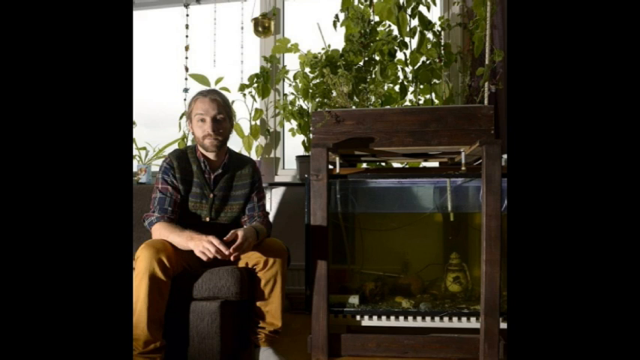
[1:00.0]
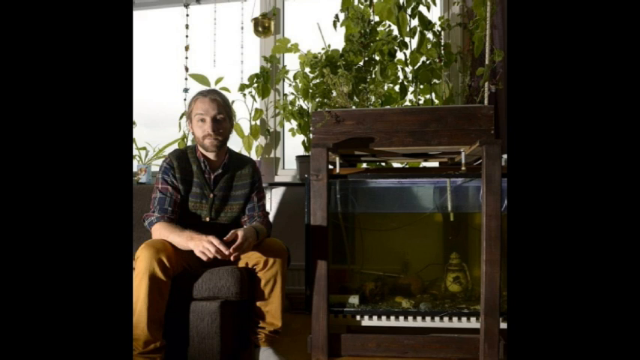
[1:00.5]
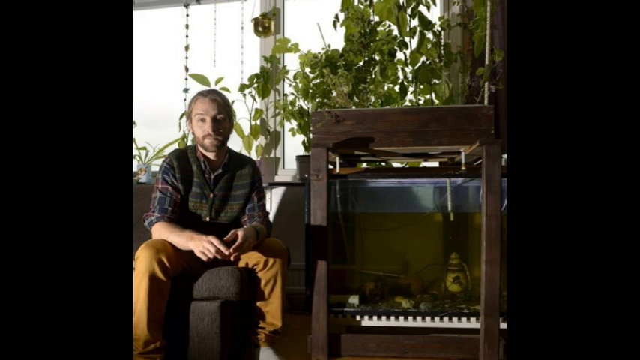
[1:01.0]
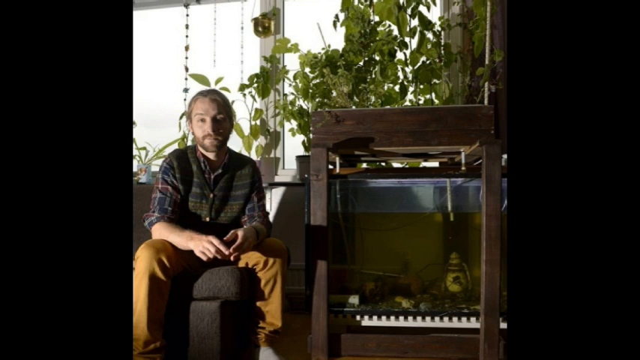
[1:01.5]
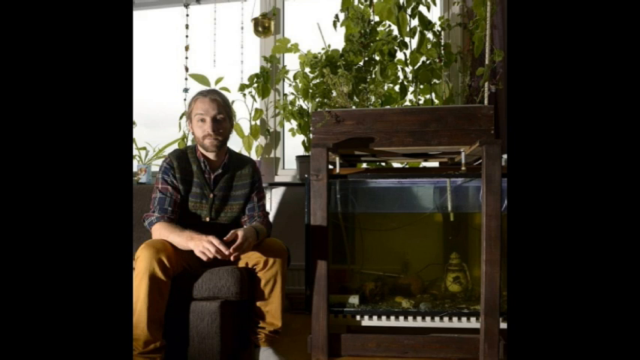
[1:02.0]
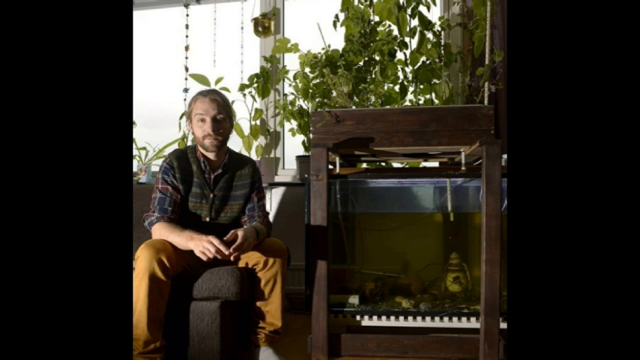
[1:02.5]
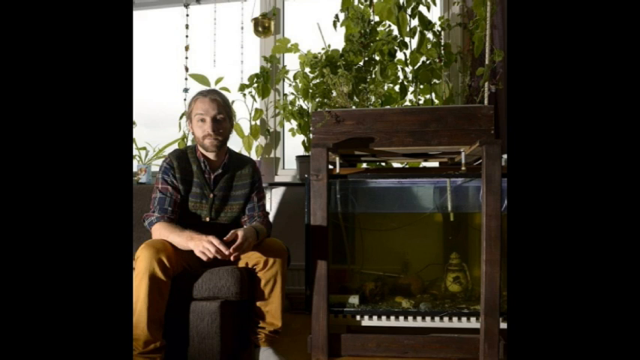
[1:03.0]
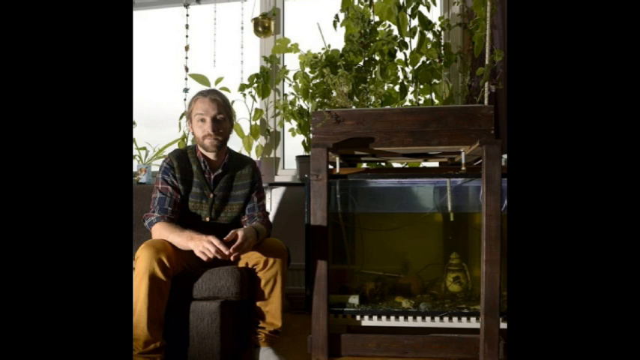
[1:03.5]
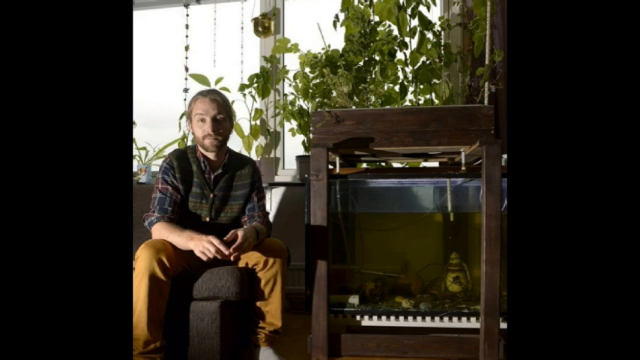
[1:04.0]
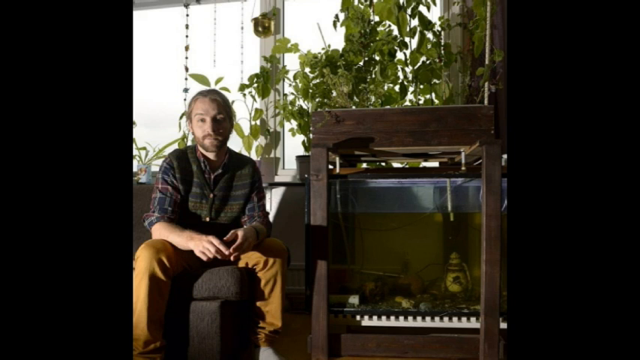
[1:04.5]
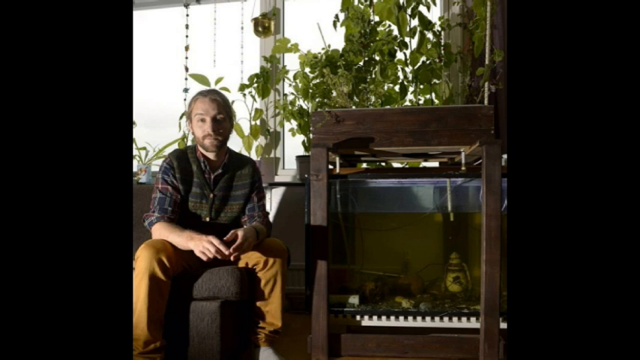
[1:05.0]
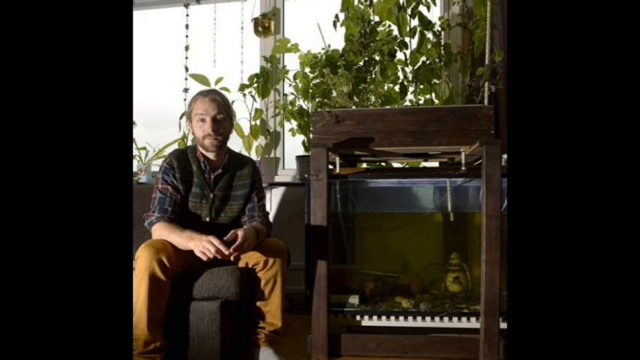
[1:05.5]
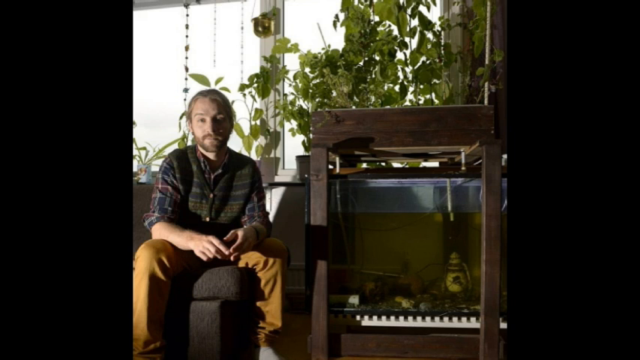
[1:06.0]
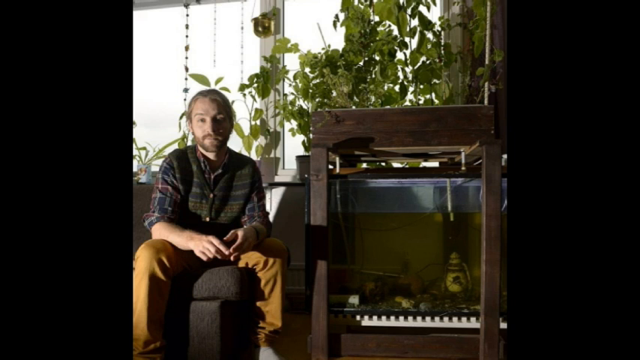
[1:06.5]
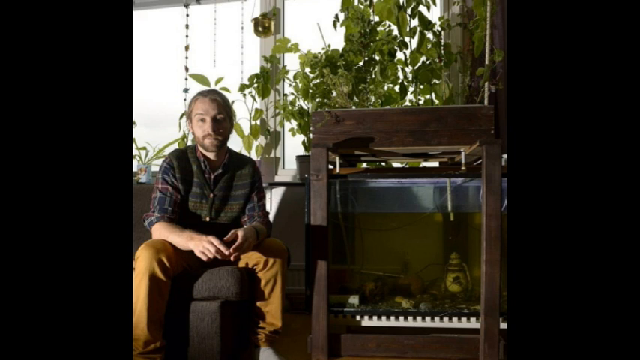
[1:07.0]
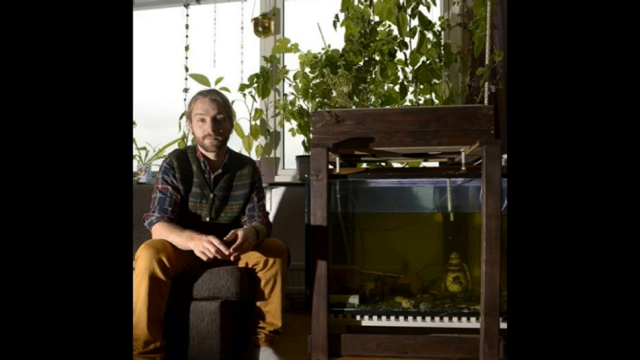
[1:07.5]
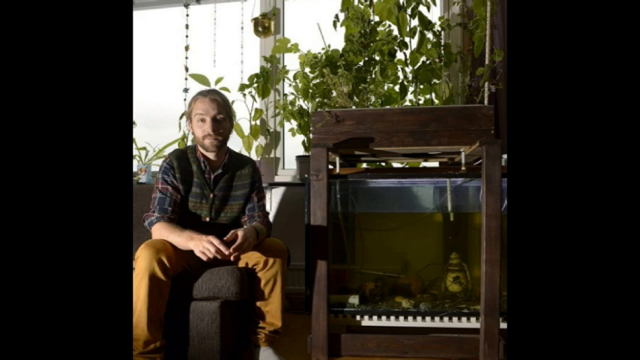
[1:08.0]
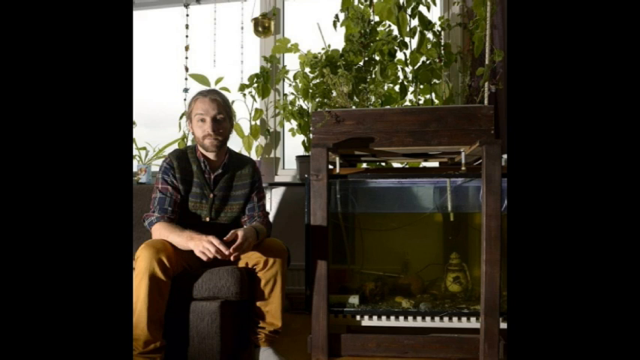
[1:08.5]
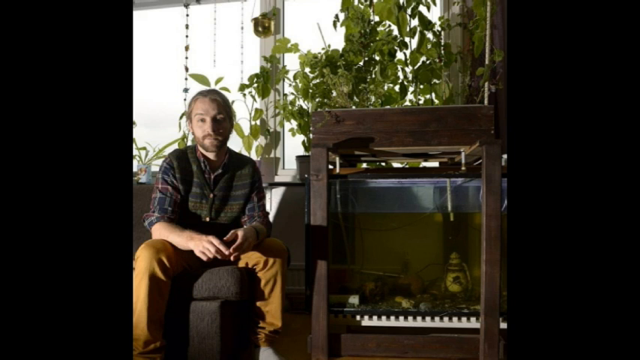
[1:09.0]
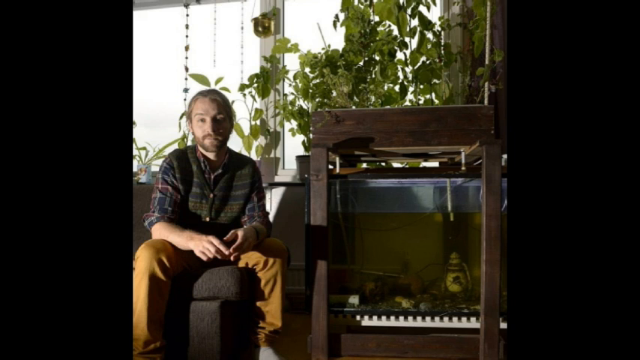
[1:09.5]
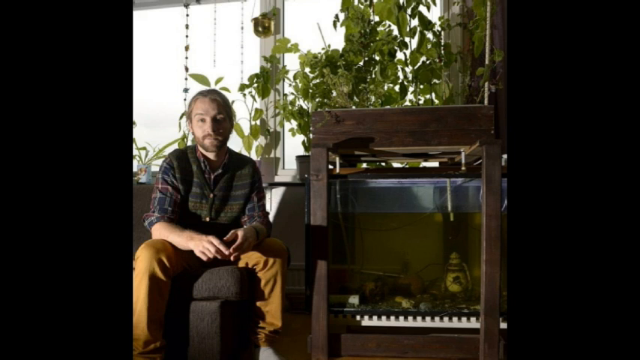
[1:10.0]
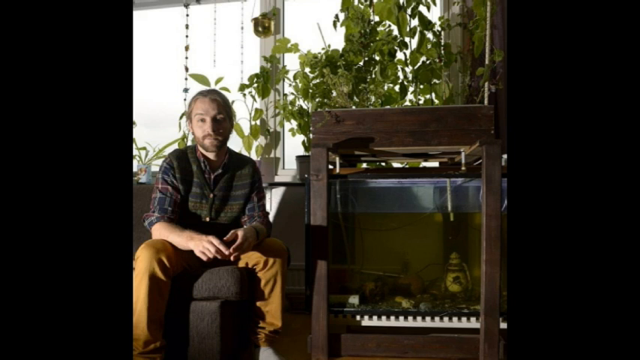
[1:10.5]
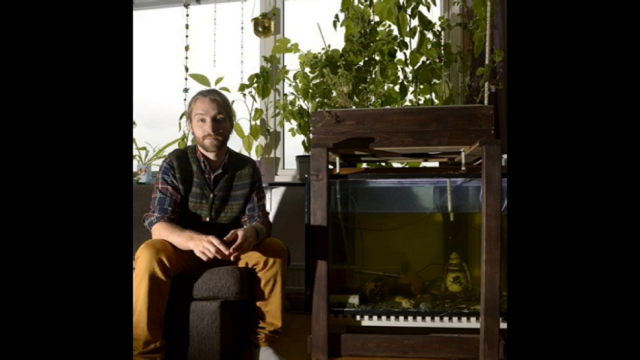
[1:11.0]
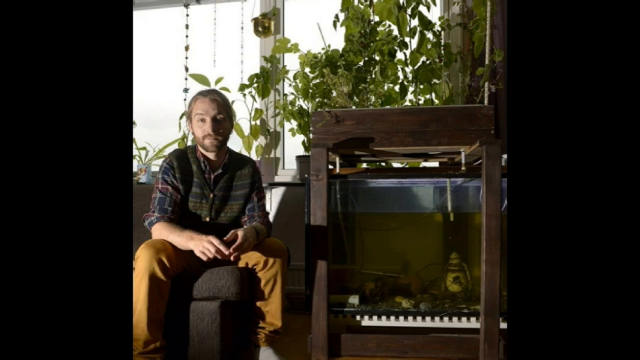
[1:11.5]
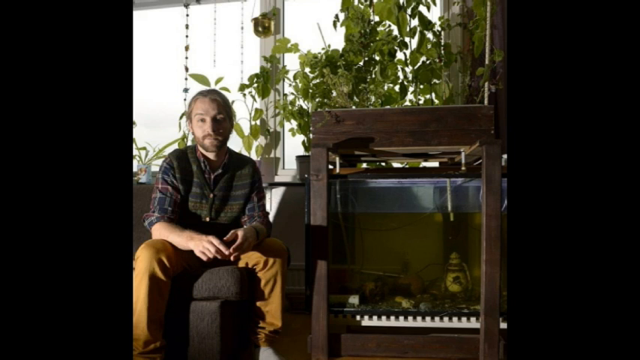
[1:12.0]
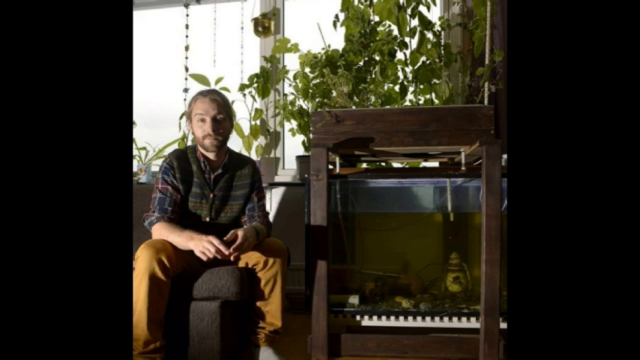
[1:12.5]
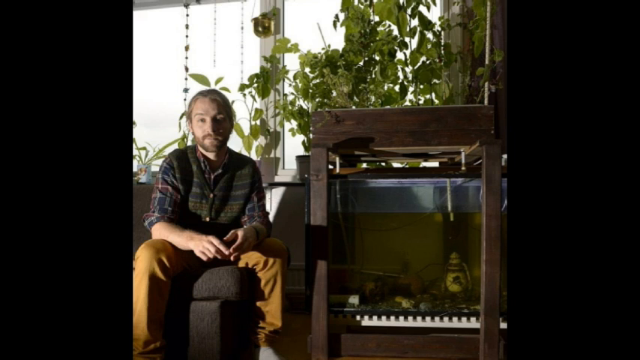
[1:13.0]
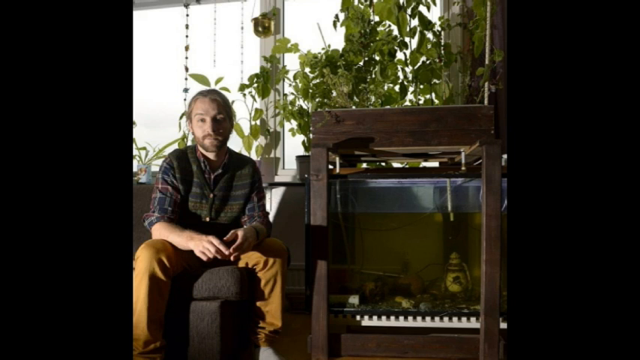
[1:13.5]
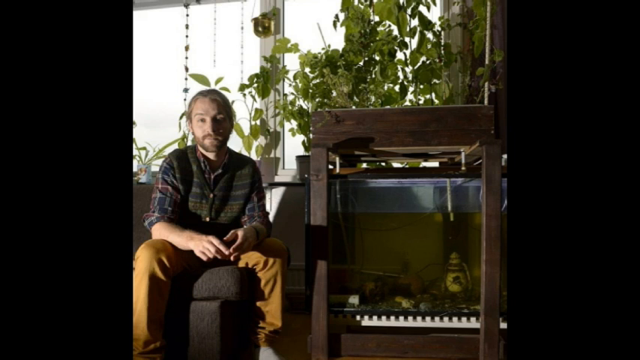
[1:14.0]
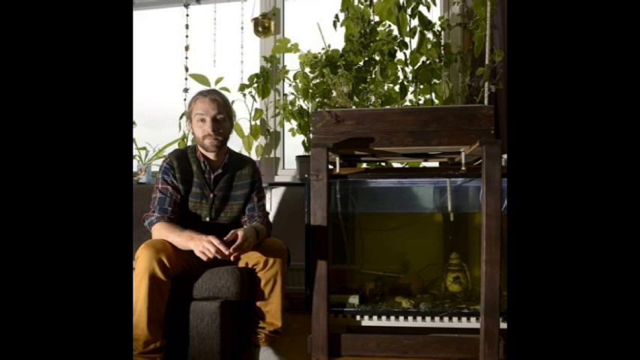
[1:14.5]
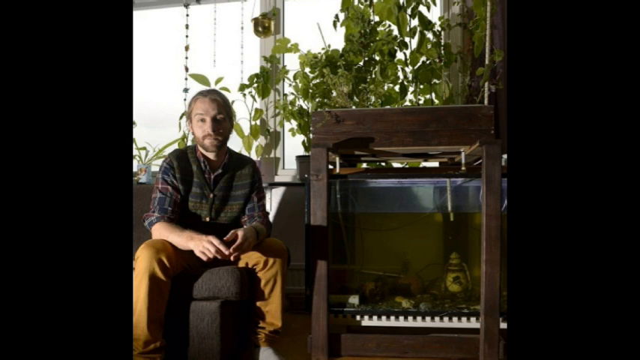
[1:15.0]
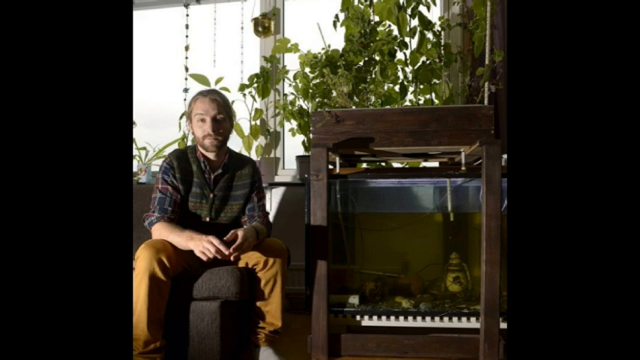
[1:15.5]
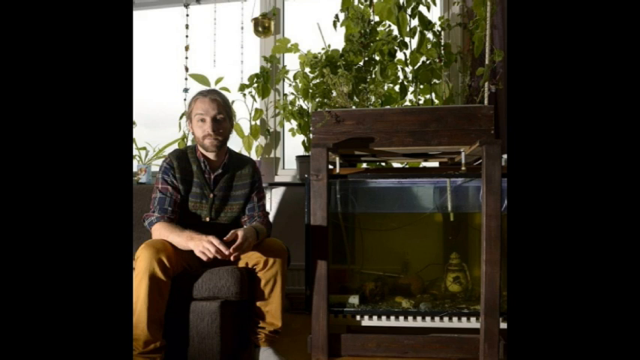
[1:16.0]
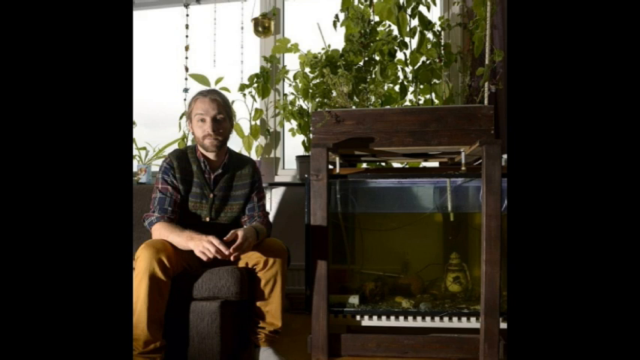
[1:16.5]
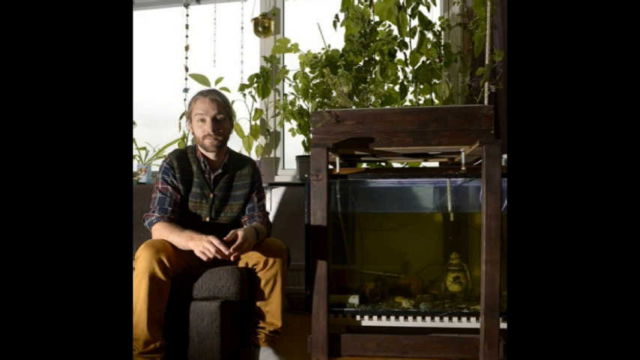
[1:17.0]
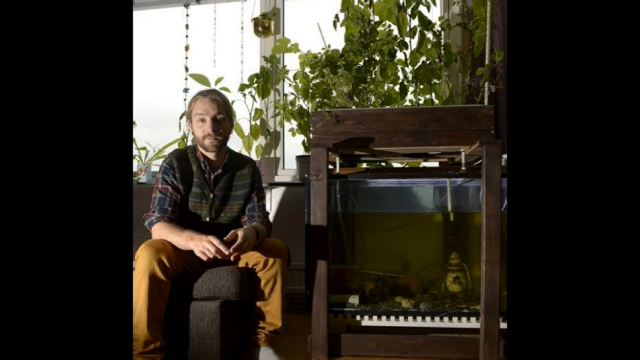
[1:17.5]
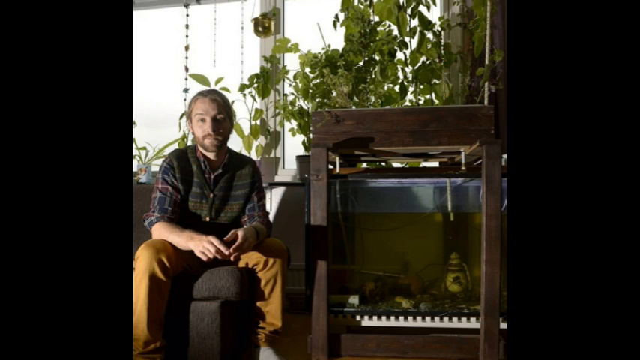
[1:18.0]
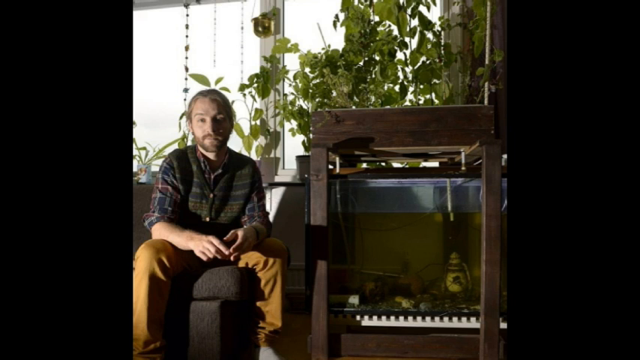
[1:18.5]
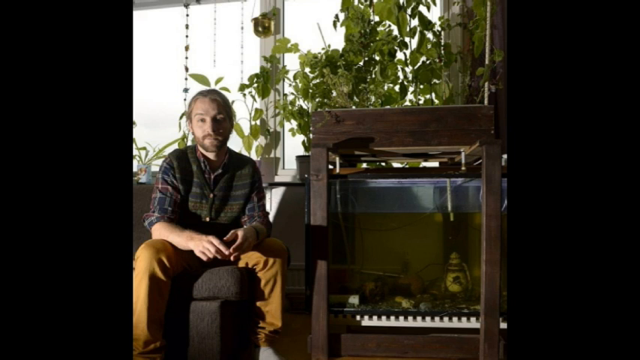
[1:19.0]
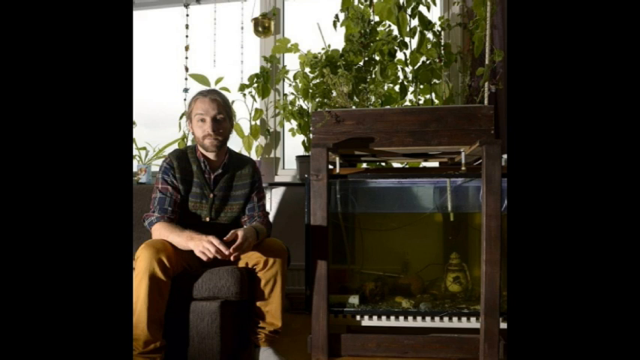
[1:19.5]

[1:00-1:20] A photo shows a gentleman wearing khaki pants and a plaid long-sleeve button-up shirt. He appears to have long hair pulled back into a ponytail and a short beard, and he is sitting on the edge of a chair. Next to him is what appears to be an indoor fish tank with no visible fish; the water in the tank is very green and looks really dirty. There are plants growing behind it, some in pots, and it is unclear whether this is an aquaponic system, since no water is visibly moving from the plants to the tank. There appear to be some tubes sticking down into the water, possibly pulling water up to water the plants, and there also appears to be a ceramic pot inside the fish tank area. Most of the plants, which look pretty big and green, are growing right behind the fish tank.